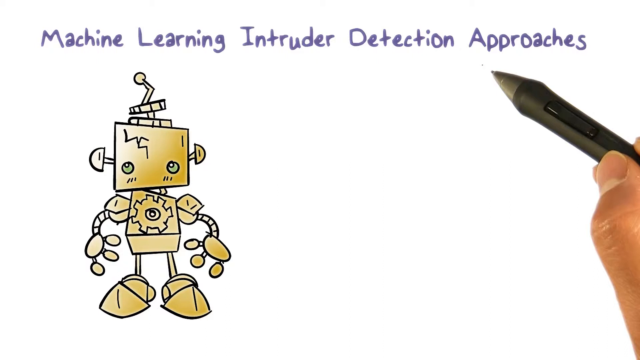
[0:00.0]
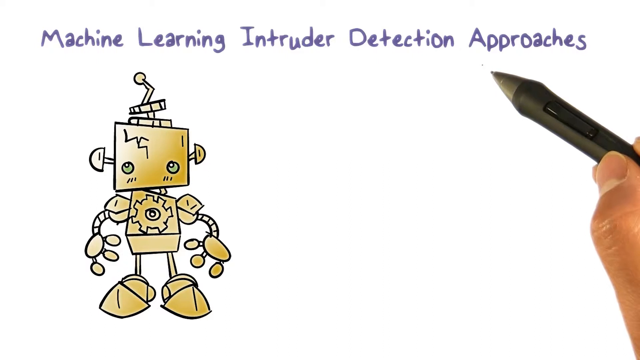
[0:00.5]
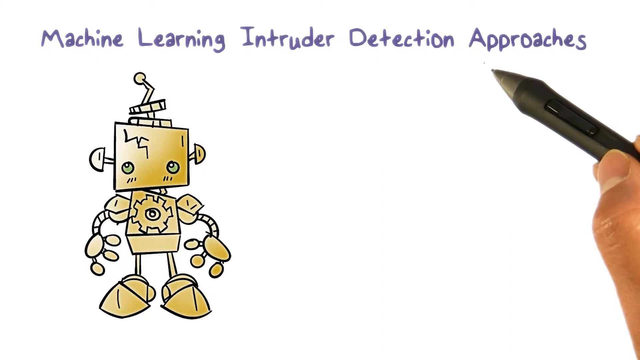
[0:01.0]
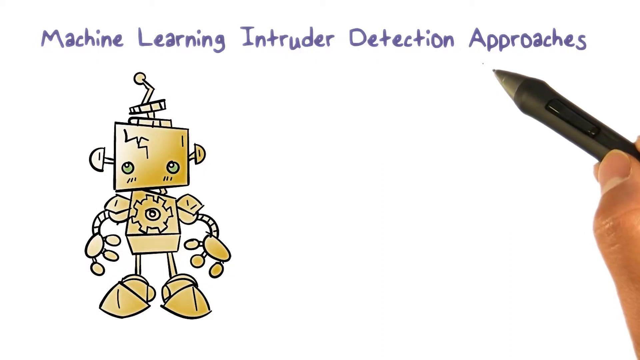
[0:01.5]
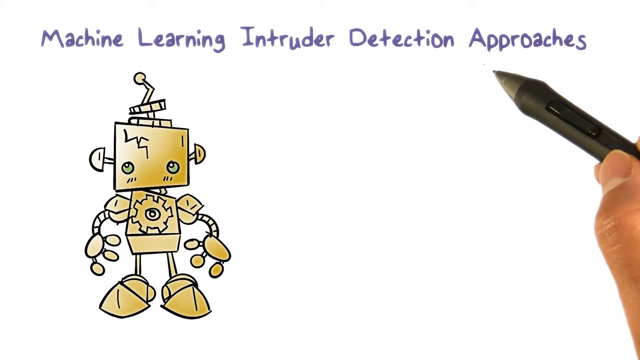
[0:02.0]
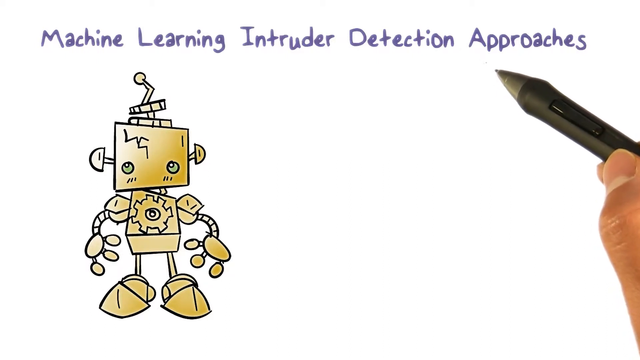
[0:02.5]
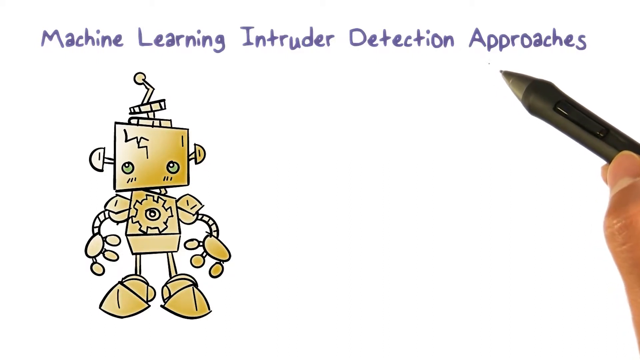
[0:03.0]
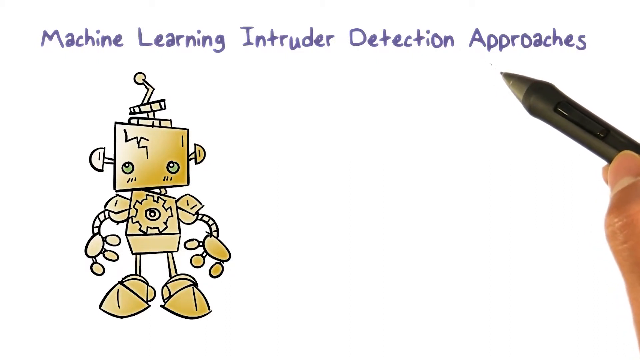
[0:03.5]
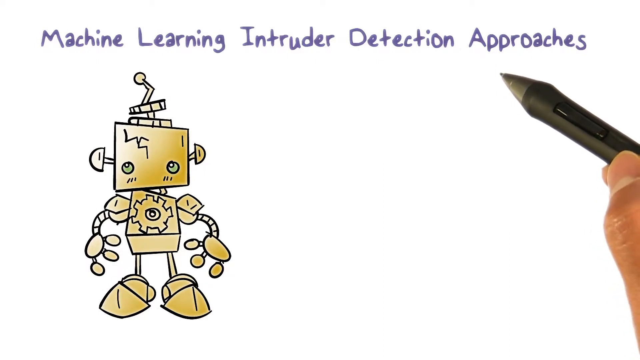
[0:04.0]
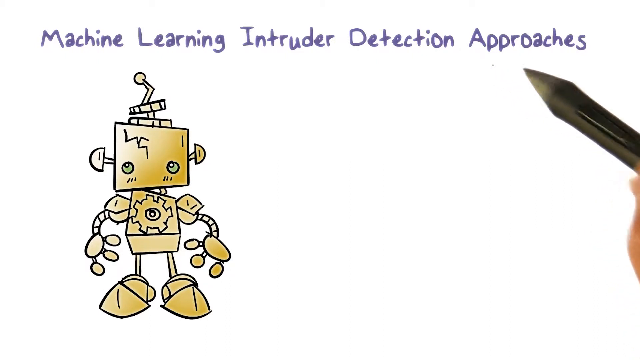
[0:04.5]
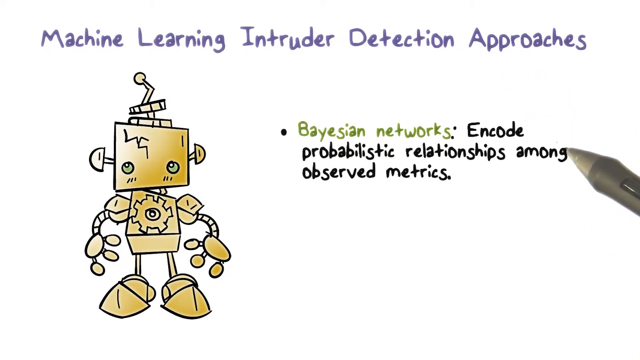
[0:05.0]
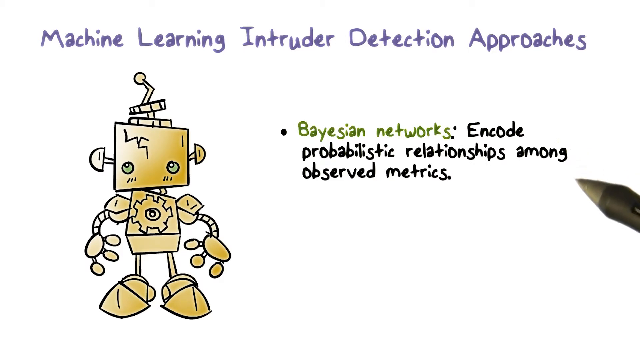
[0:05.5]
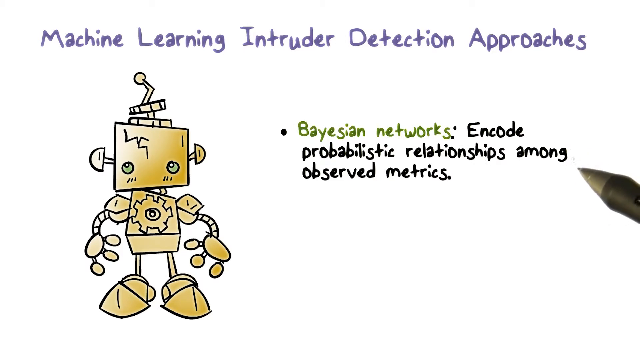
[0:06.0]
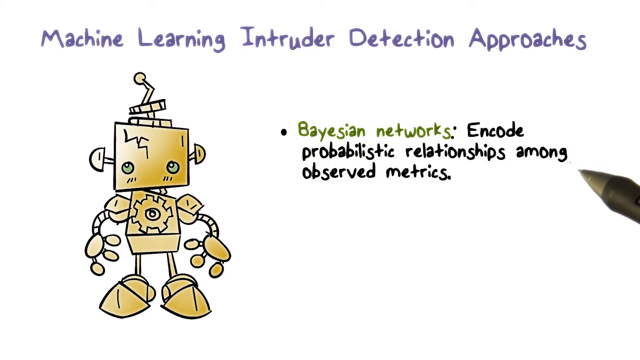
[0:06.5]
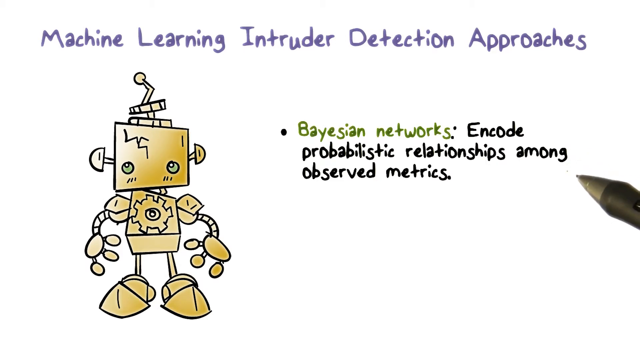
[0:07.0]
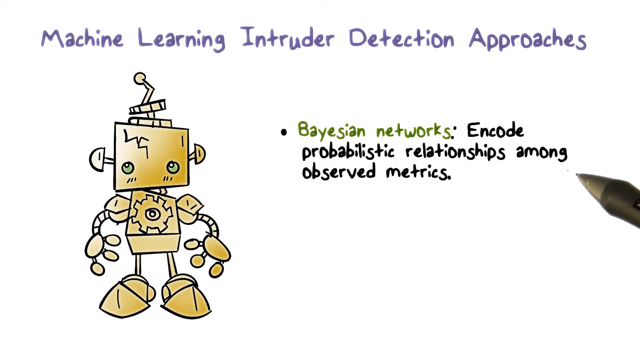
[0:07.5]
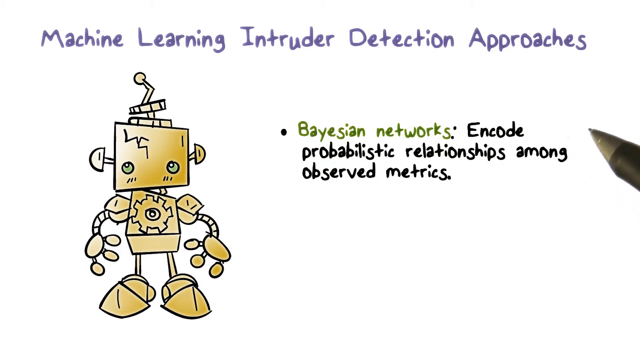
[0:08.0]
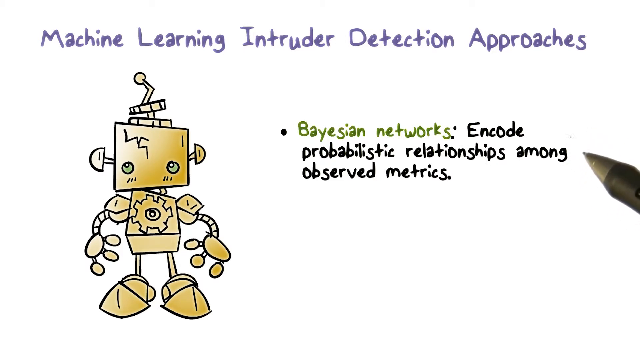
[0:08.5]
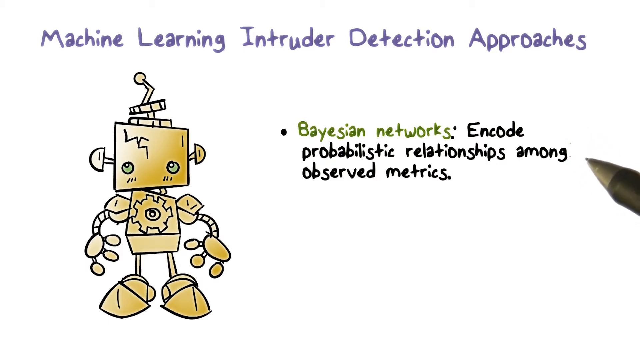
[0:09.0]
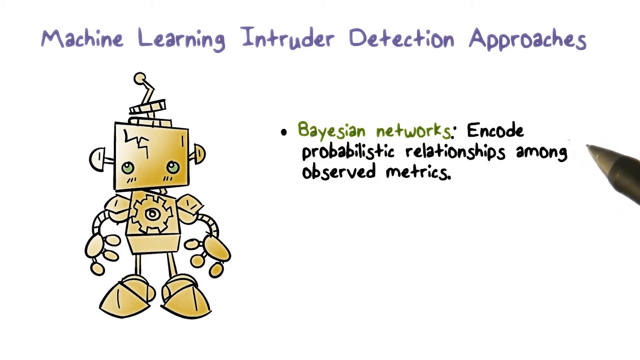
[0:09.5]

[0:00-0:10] The picture has a white backdrop that fades down to gray and then to black in the last inch of the paper. There is a drawn character with a square for a head, with two circles in that square. Small things stick out to the side on something like a tube that has a semicircle on its edges at the top. There are multiple objects, one sticking up with a ball on it. His body is a rectangle, a 3D box with a gear shift in the middle; the gear shift is round and has multiple items sticking out. On the right side, a hand holds a pencil between the thumb and finger. At the top, the text reads "machine learning intruder detection approaches." The hand moves slightly back, and the pencil moves and writes "Biasion networks," then continues on the paper with "encode problematic relationships," as a bullet point.